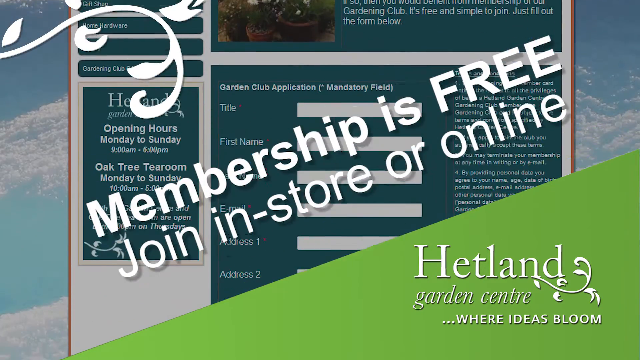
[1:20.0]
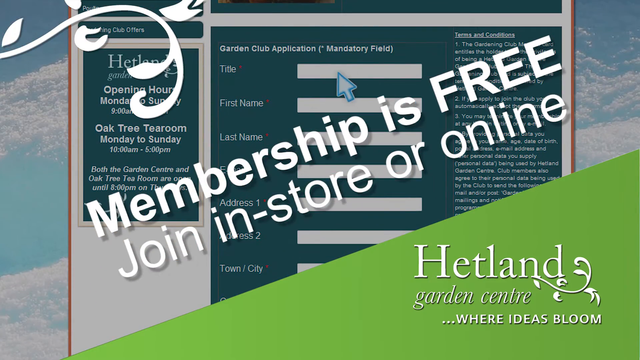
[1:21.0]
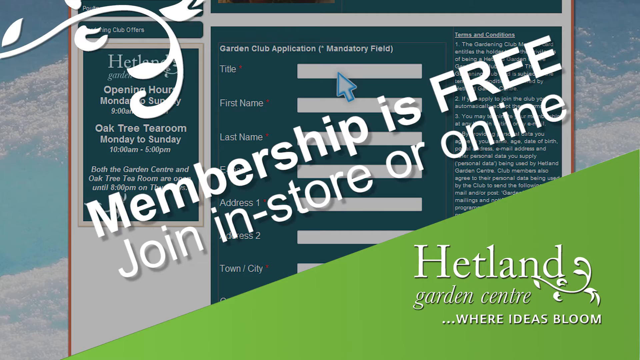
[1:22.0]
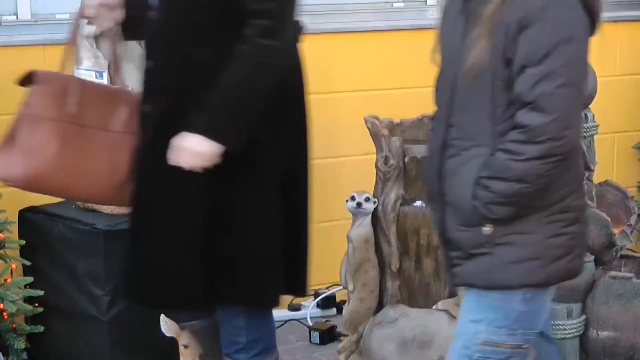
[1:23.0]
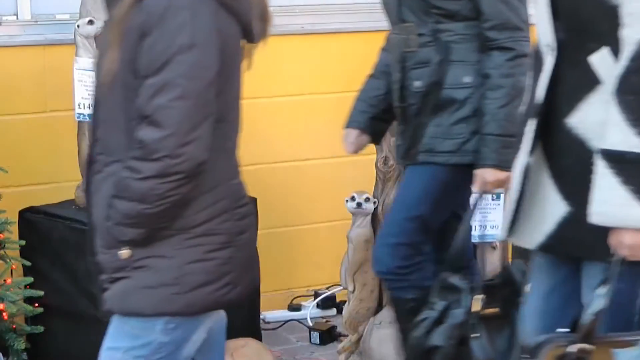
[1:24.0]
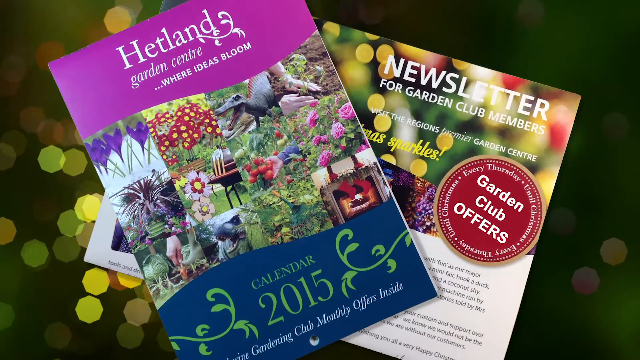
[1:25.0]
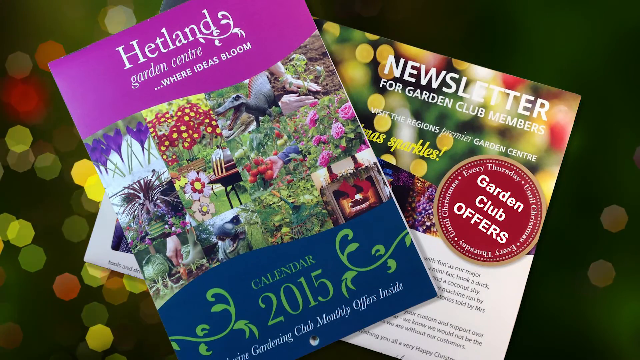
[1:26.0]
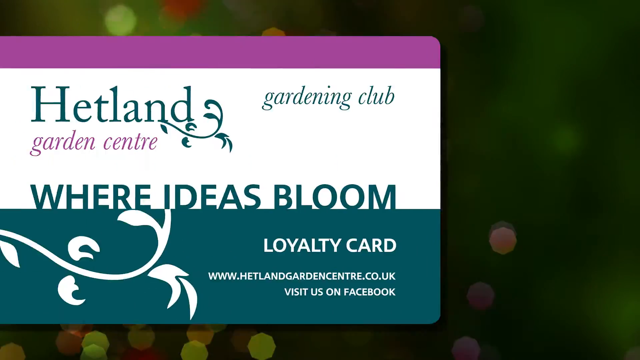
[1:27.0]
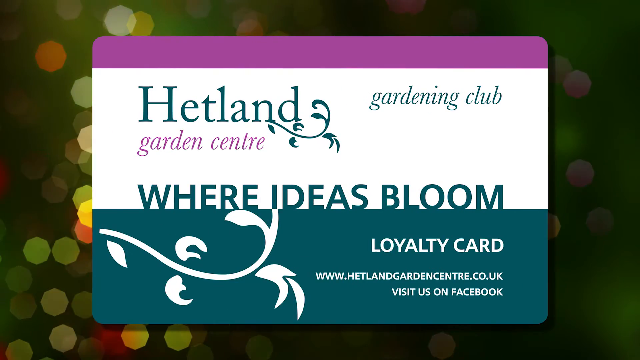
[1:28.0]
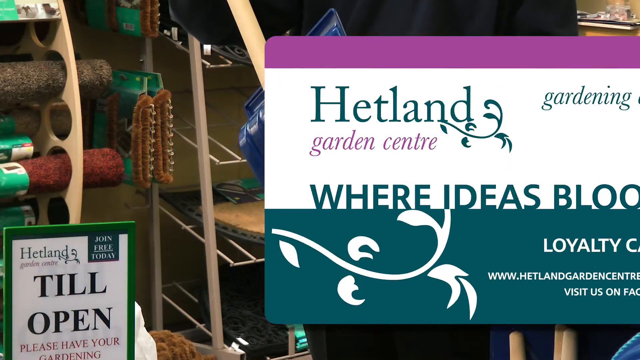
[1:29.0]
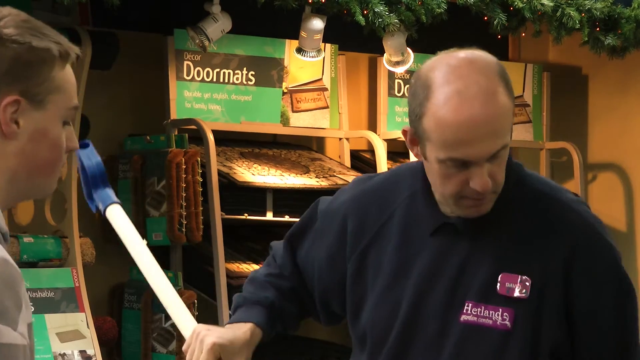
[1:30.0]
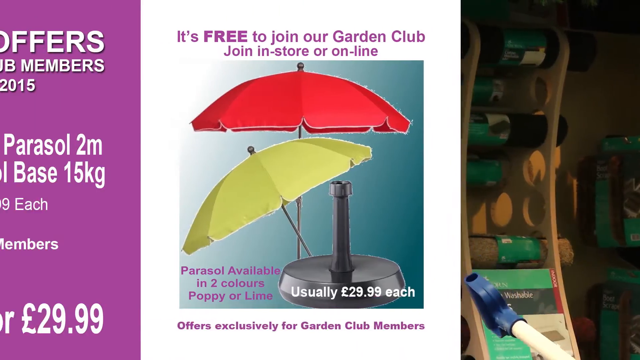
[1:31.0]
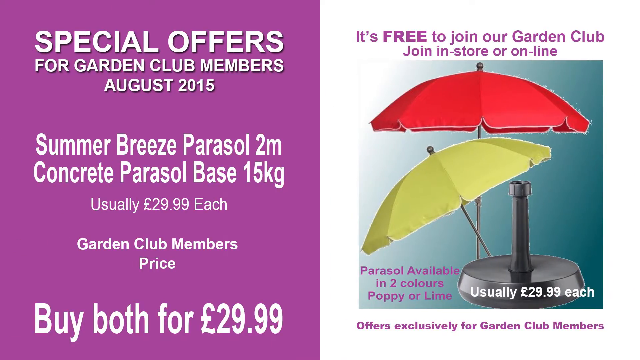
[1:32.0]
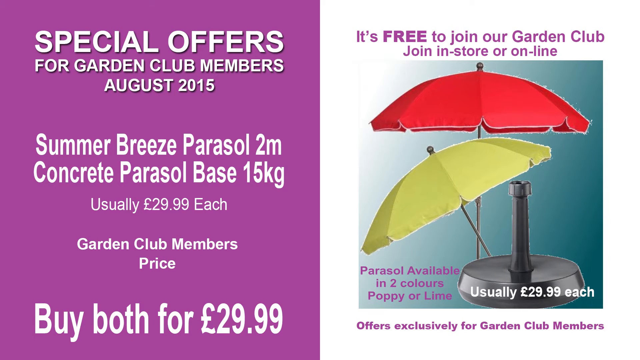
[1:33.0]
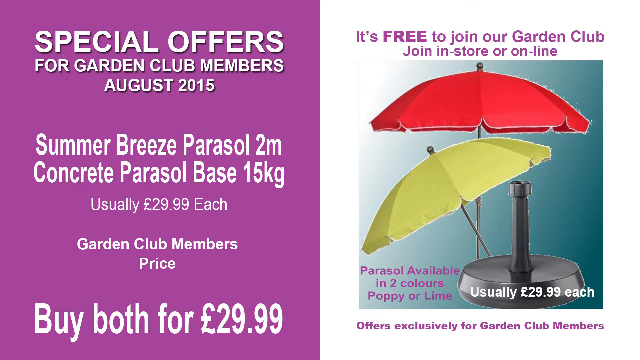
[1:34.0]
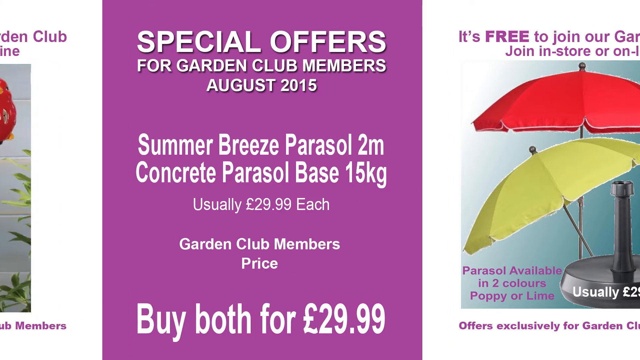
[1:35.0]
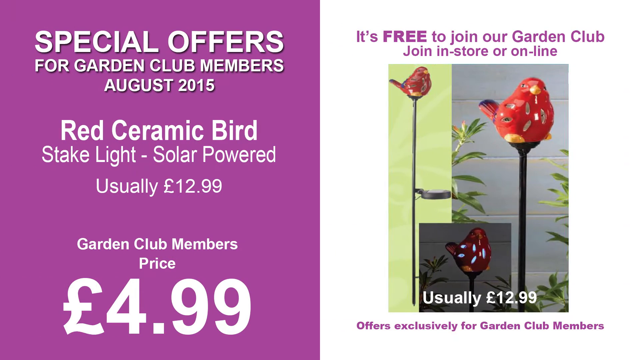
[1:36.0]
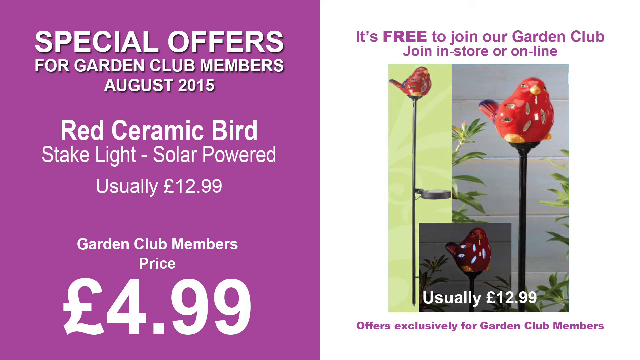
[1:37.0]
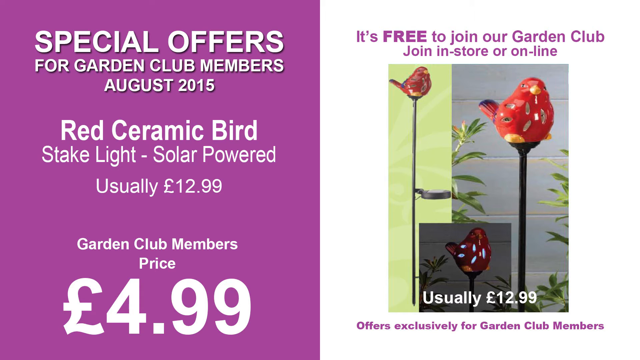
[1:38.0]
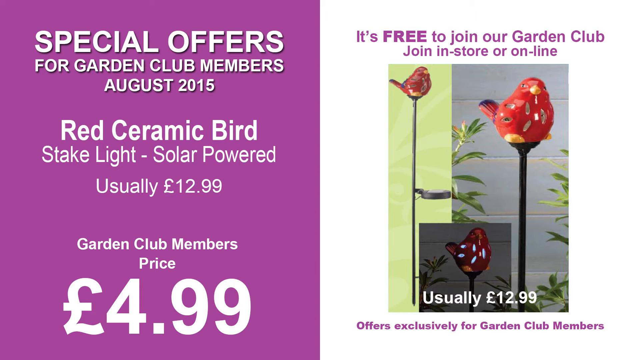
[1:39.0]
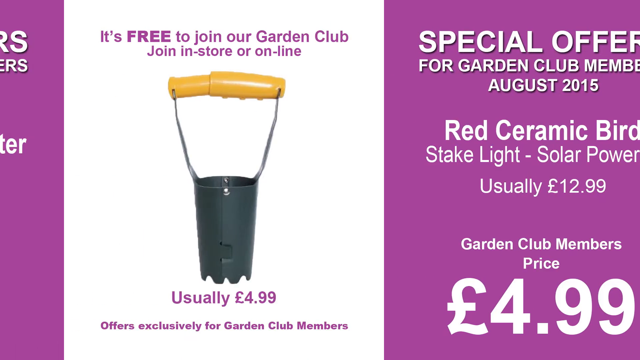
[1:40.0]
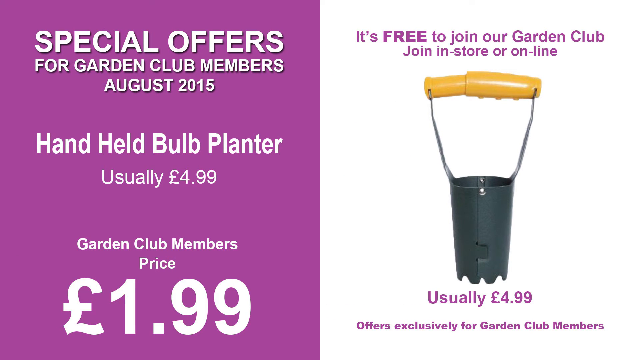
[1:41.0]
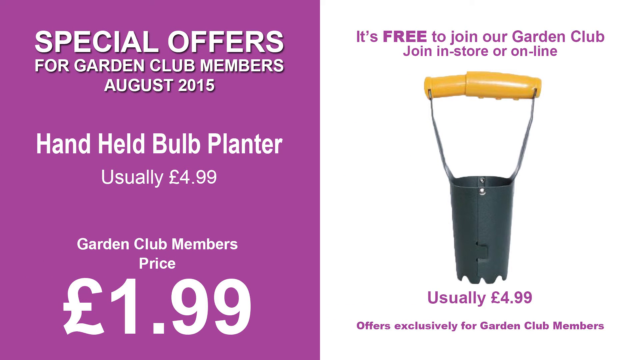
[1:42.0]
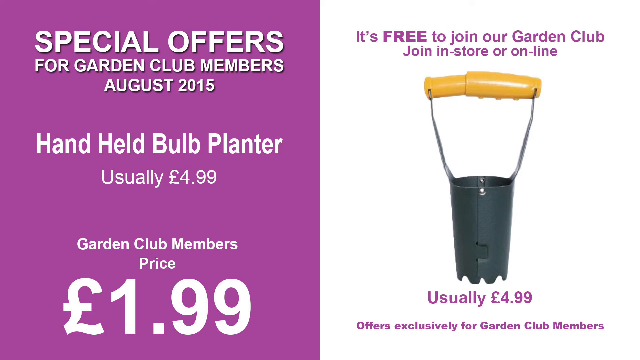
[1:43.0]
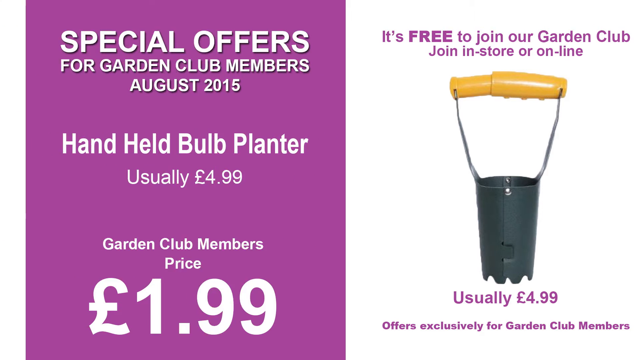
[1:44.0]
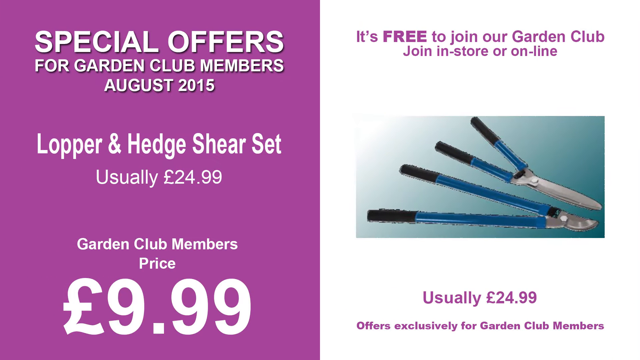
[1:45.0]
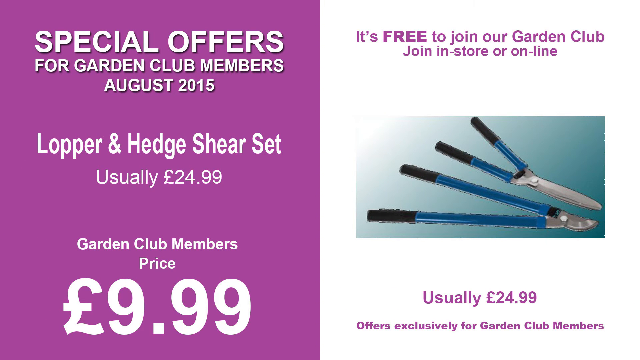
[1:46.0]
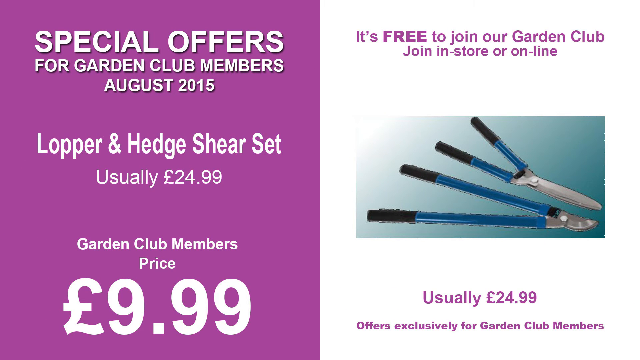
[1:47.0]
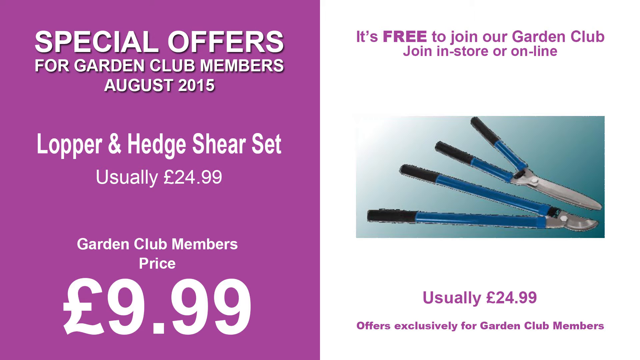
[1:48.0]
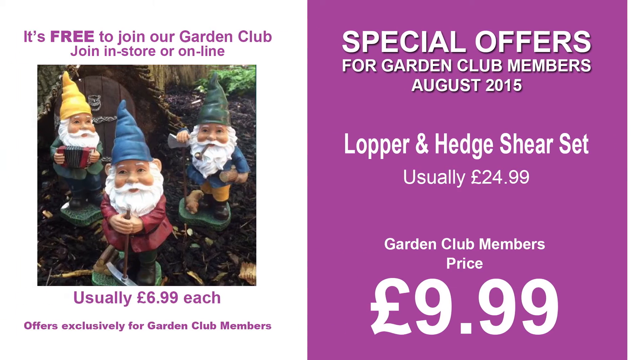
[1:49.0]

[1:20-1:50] The graphic reads "membership", "free" and "join in store online", followed by "Hetland Garden Center where ideas bloom", the company's slogan. A room is shown with a yellow wall at the bottom, statues of animals, and people walking by: a woman in tall black boots, someone walking in front of her in a somewhat dark jacket and blue pants, and another person in a white and black outfit. What could be catalogs are shown, reading "Hetland Garden Center" and "2015 calendar", with a newsletter on the right side for garden club members, and "garden club offers" in a red circle. Another sign is superimposed on the screen, reading "Hetland Garden Center" and "loyalty card". A Hetland worker is scanning or showing a shovel. Another superimposed advertisement reads "special offers for garden club members August 2015", "Summer Breeze Pyrosol", "Concrete Pyrosol Base" and "Buy both for $29.99". Two umbrella-like things are on the right side, one red and one green; these pyrosols are usually $29.99 each. "Special offers" appears in purple.